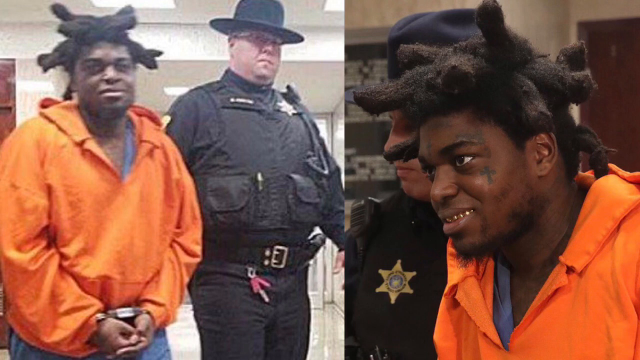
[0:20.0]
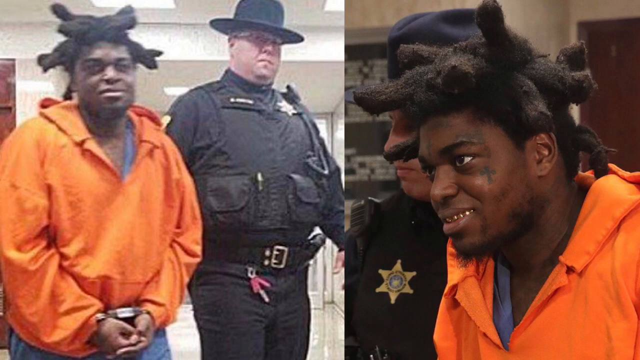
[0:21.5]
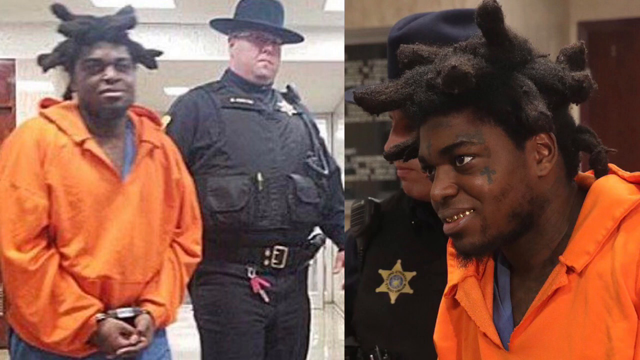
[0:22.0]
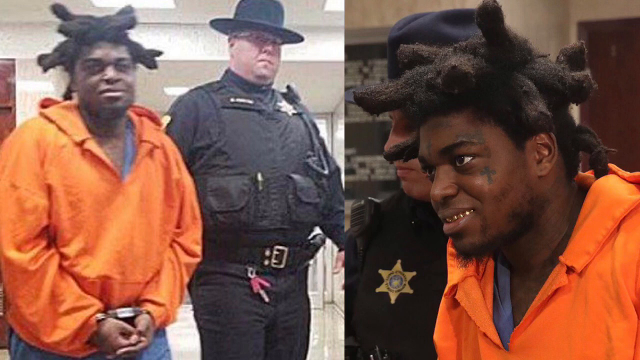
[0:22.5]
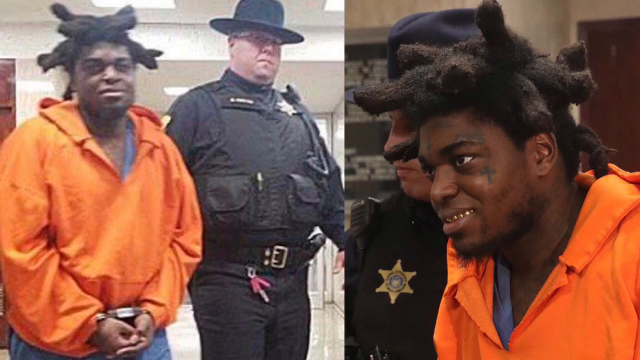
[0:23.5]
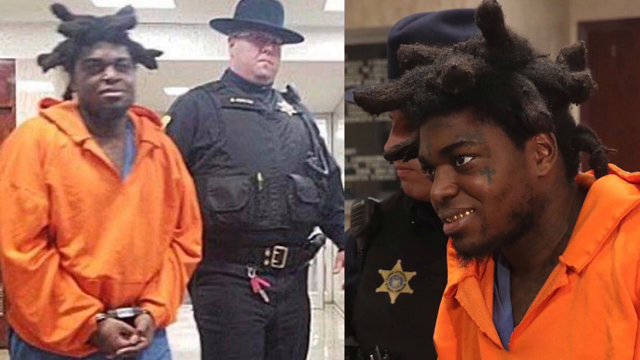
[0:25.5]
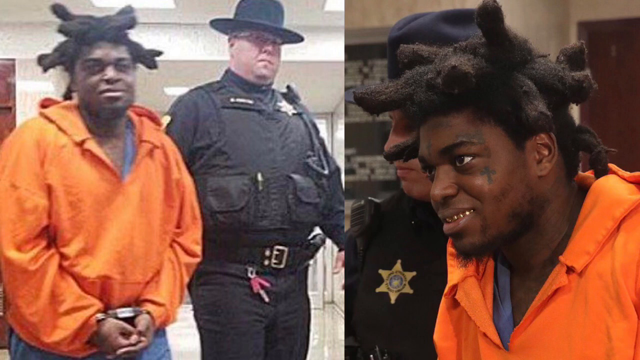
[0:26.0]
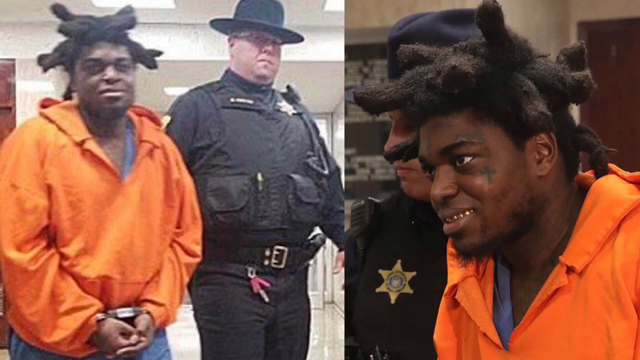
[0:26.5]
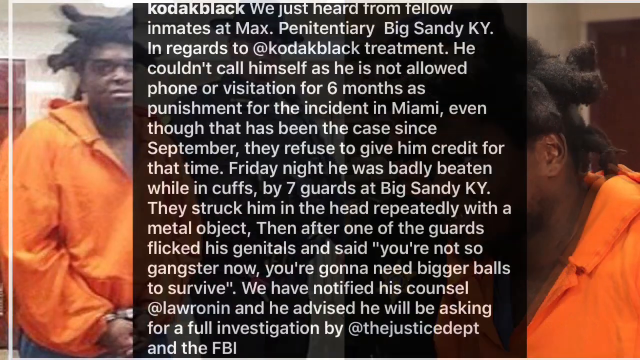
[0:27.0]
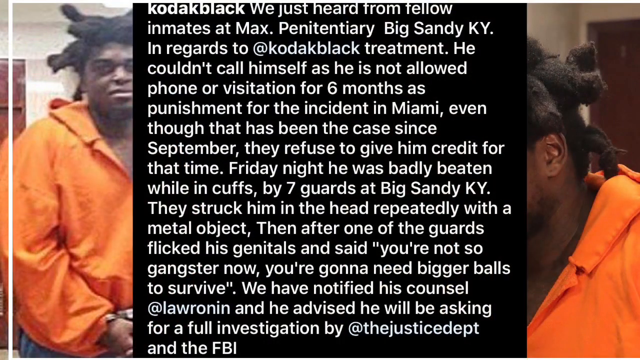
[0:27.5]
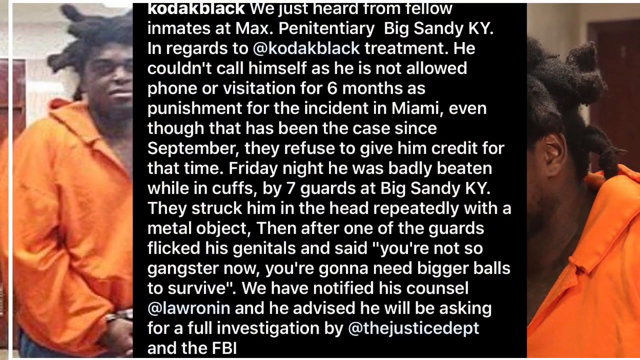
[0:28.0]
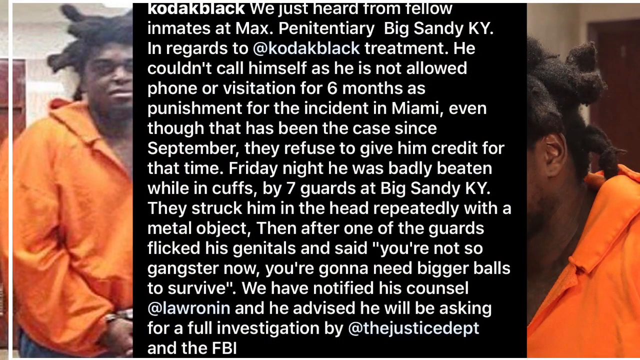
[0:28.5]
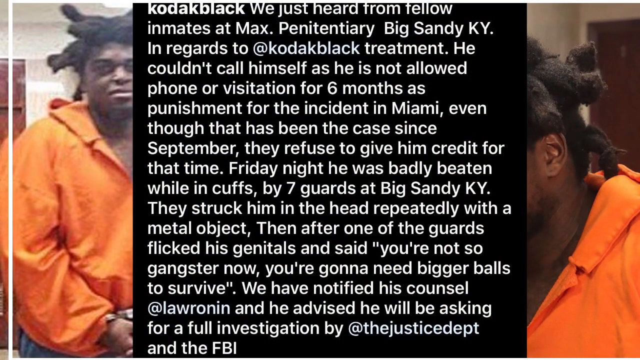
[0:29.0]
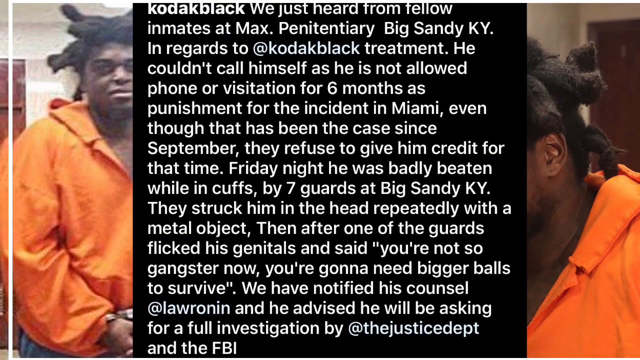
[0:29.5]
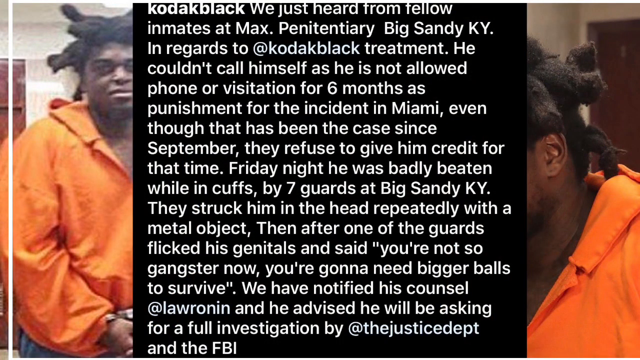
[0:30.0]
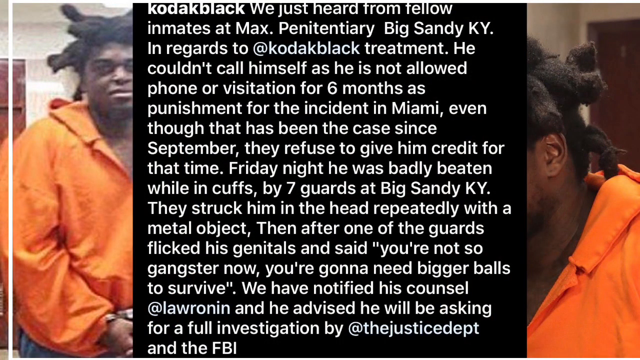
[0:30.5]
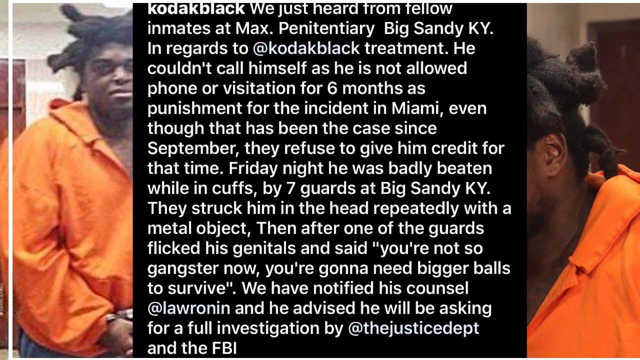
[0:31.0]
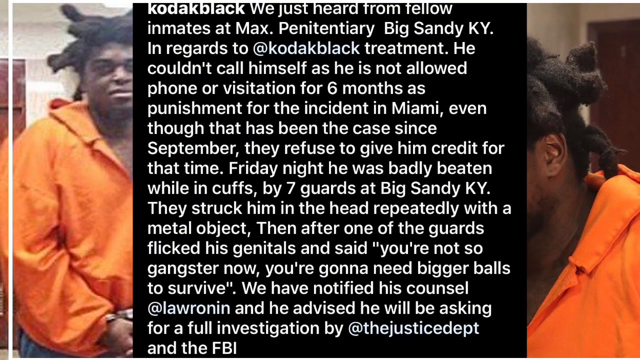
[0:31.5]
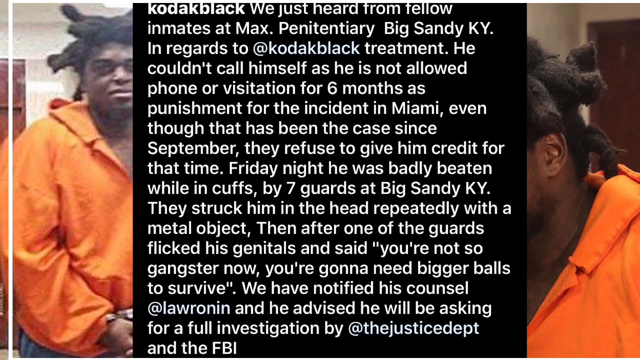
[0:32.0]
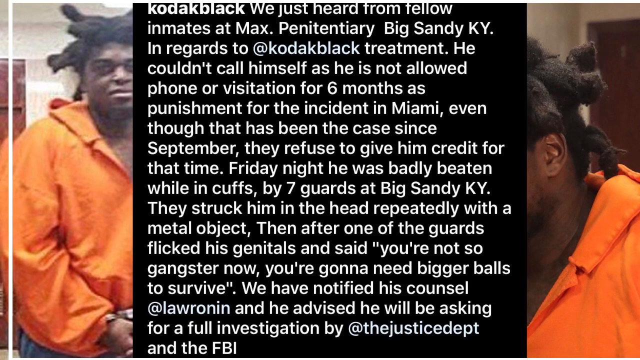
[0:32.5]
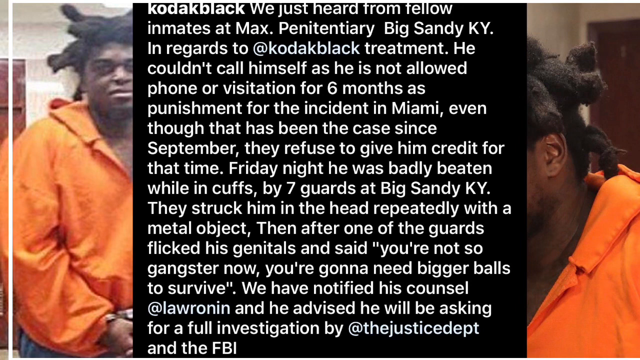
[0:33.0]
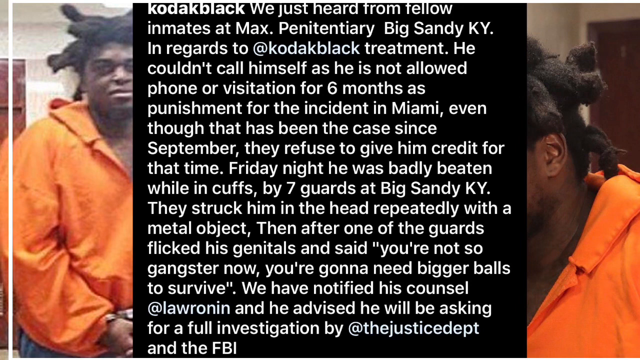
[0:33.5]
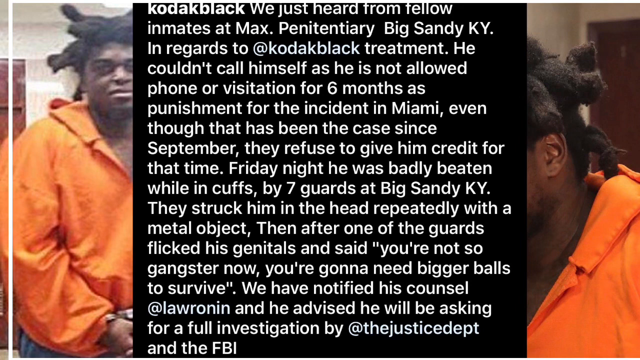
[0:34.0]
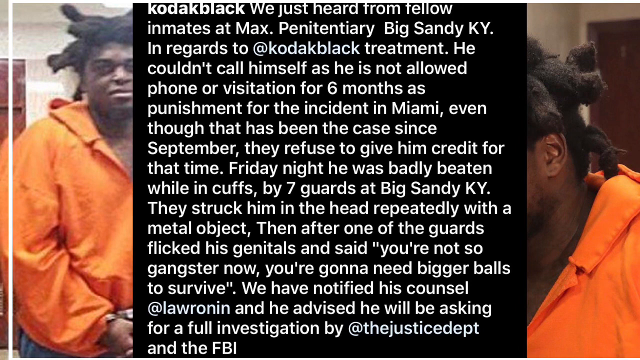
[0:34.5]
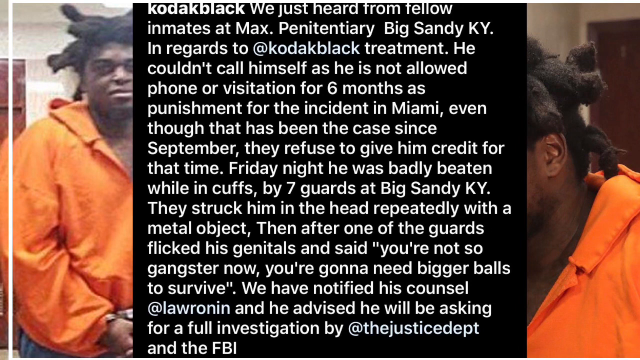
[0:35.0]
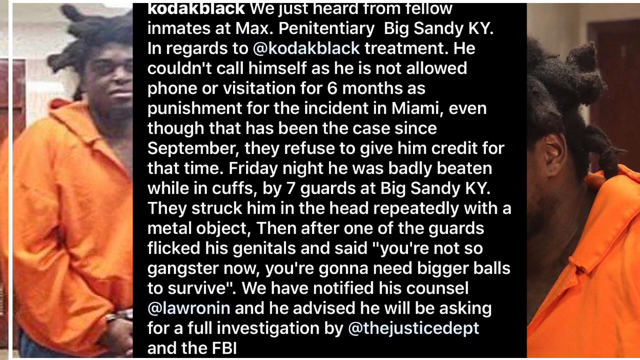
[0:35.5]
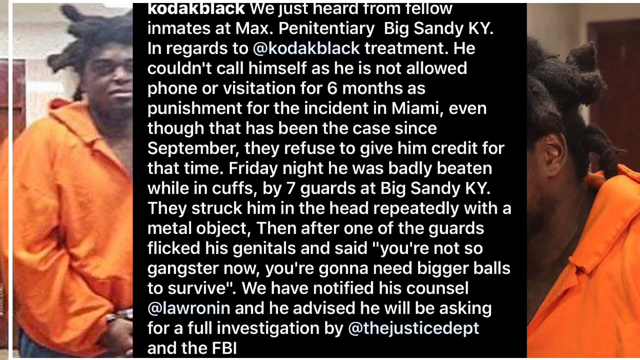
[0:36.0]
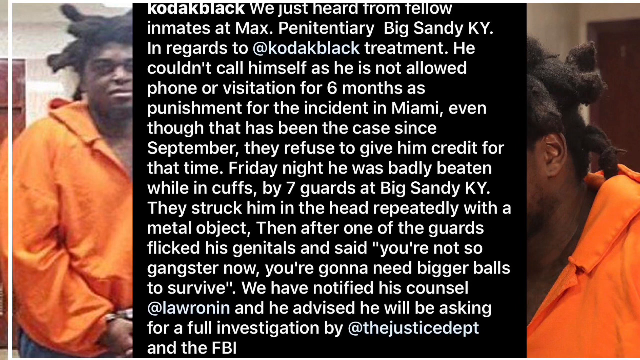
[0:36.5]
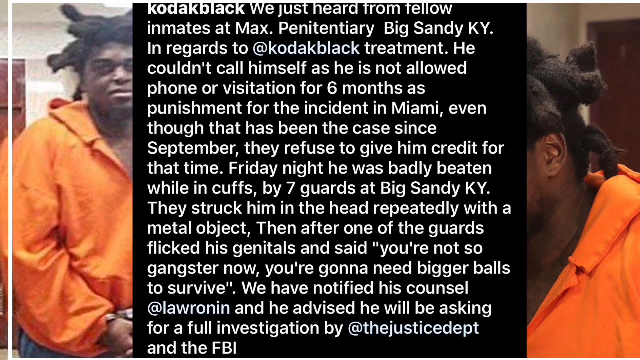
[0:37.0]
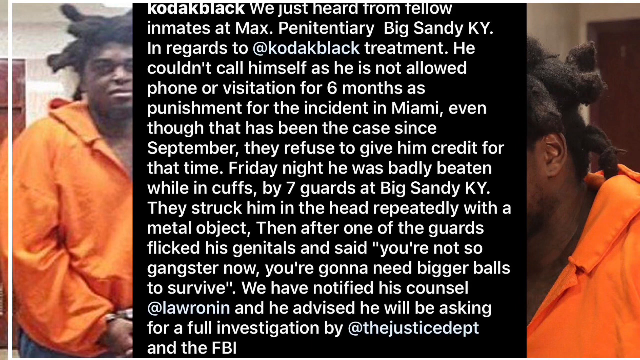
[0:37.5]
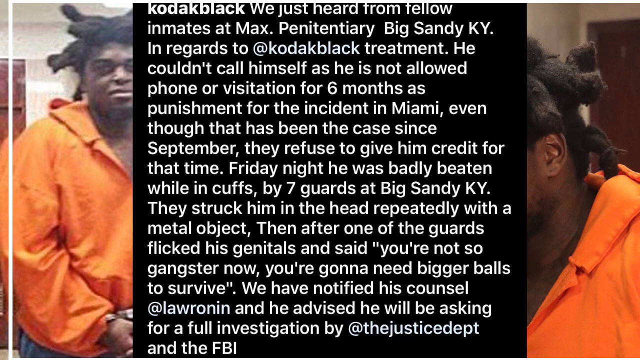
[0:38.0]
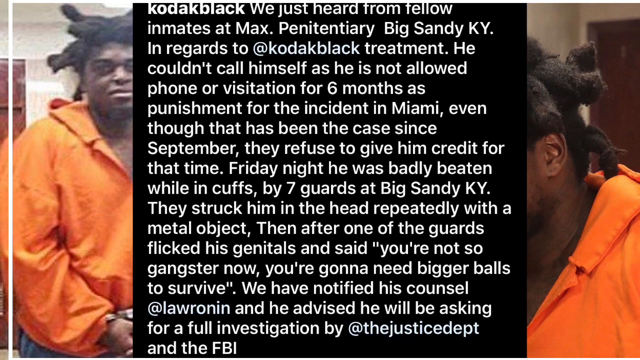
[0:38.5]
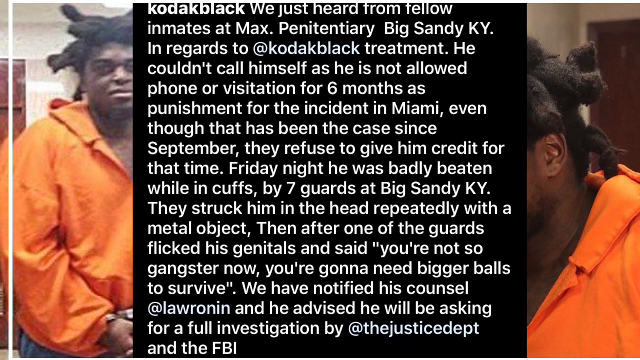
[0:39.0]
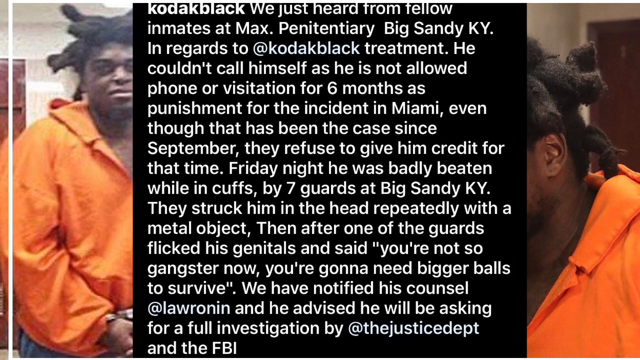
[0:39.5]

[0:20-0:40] The same two photos remain on the left and right. The one on the left takes up slightly more than half the screen and is a bit grainier and blurrier than the photo on the right, which is much clearer and looks like better quality. After several moments, text appears in the center of the screen, taking up most of the image, with only parts of the left and right images shown on either side. It is a black box with white text stretching from the top of the screen to the bottom and appears to be a social media post. The user seems to possibly be named Kodak Black; the post tags @kodakblack and mentions other accounts such as @lawronin and @thejusticedept. It appears possibly to be about the man in the orange suit shown in the photos.